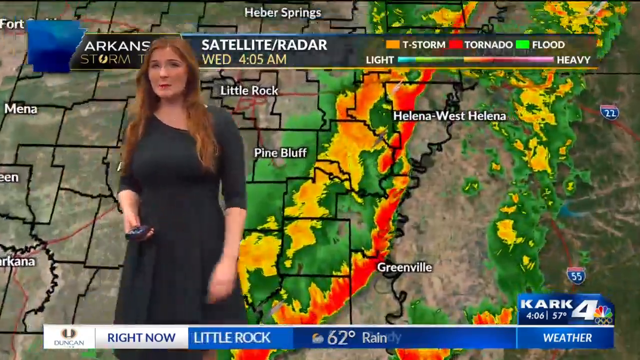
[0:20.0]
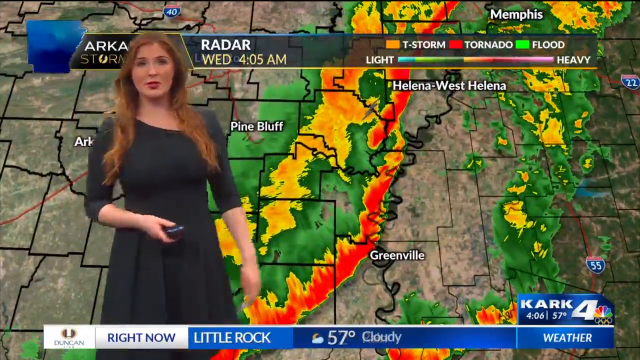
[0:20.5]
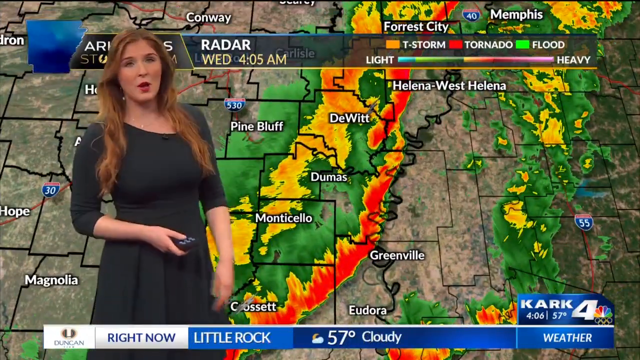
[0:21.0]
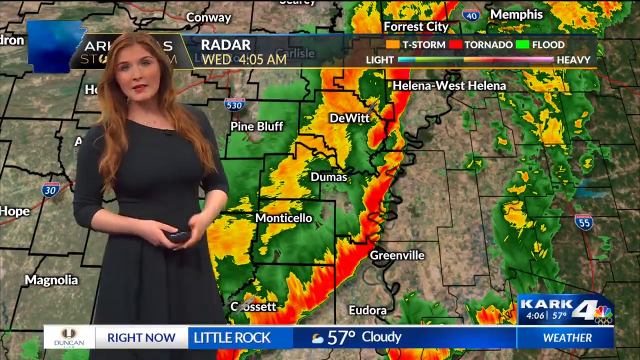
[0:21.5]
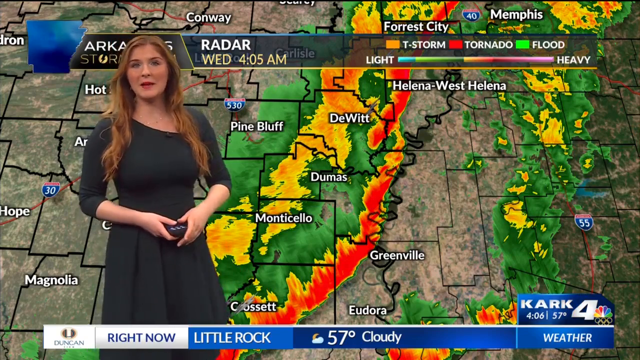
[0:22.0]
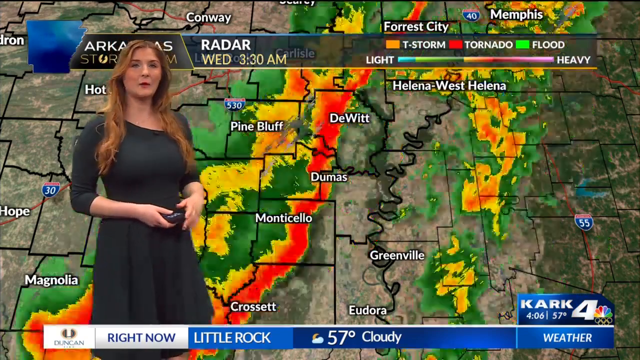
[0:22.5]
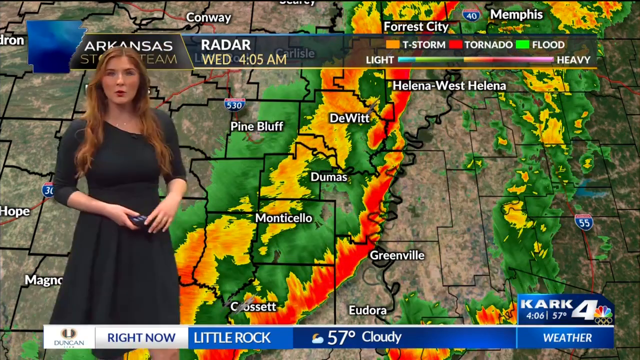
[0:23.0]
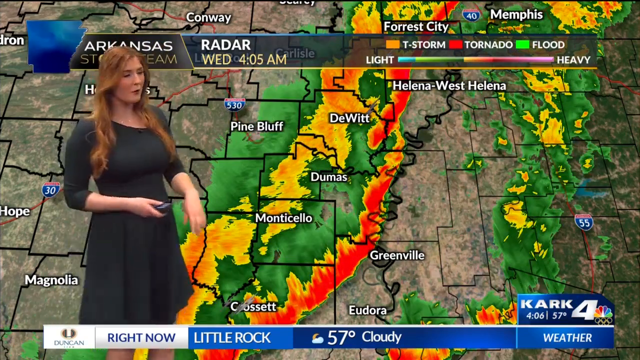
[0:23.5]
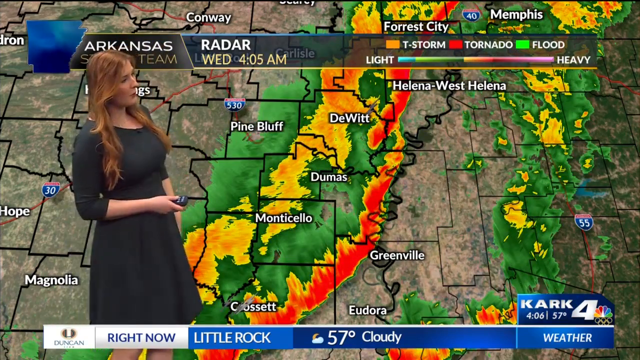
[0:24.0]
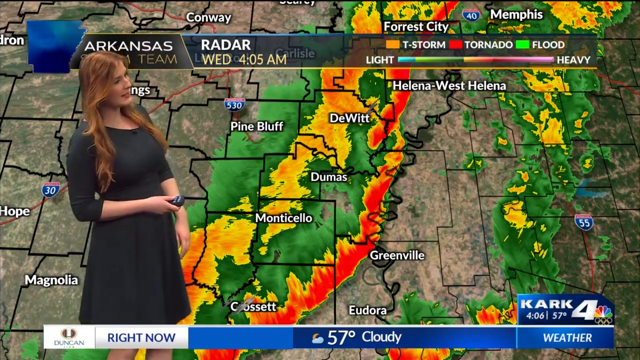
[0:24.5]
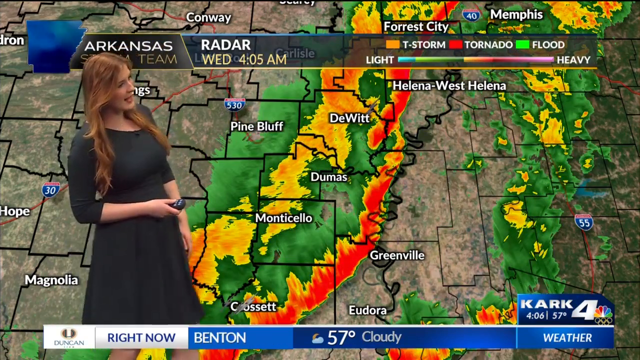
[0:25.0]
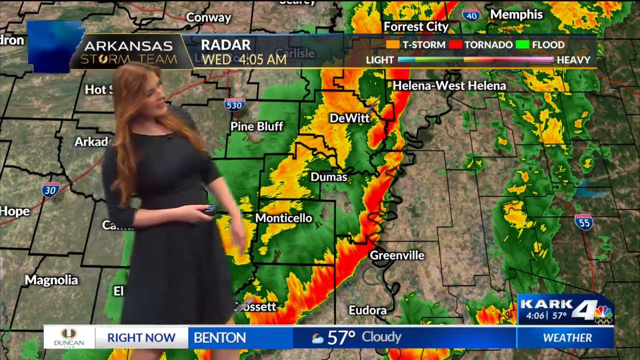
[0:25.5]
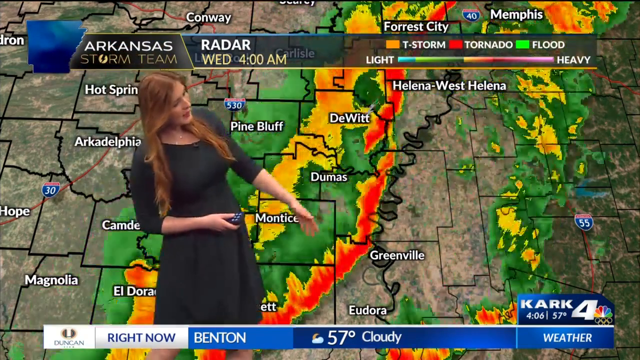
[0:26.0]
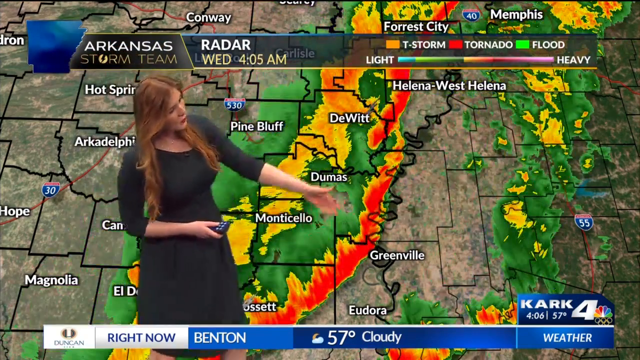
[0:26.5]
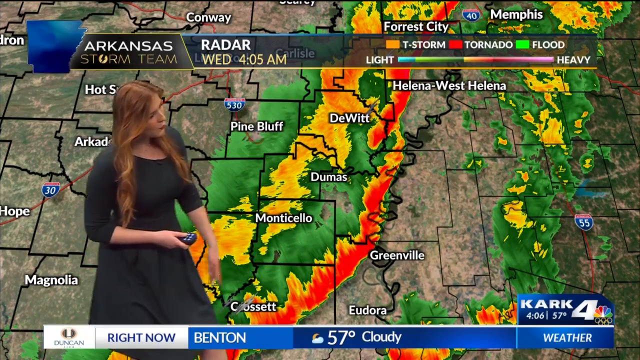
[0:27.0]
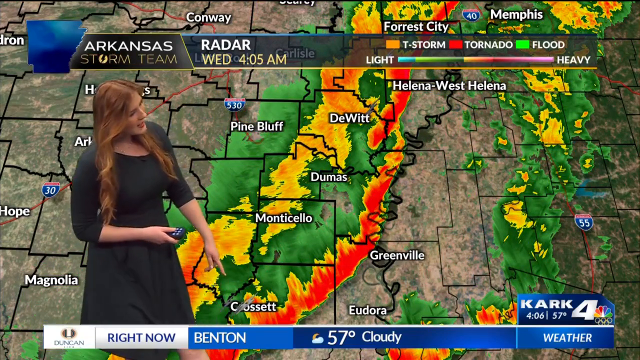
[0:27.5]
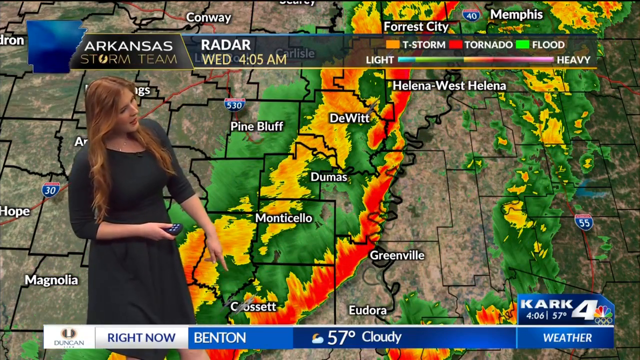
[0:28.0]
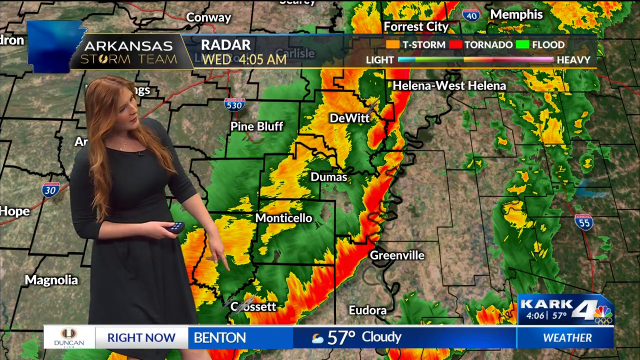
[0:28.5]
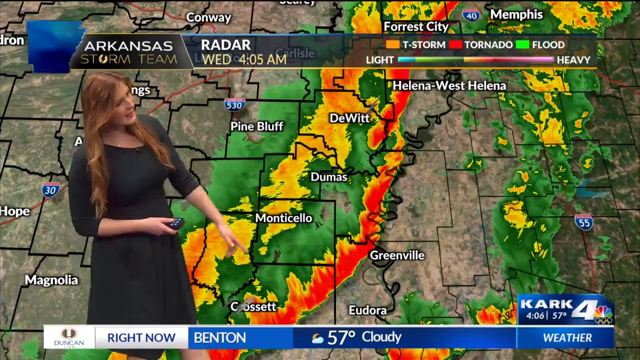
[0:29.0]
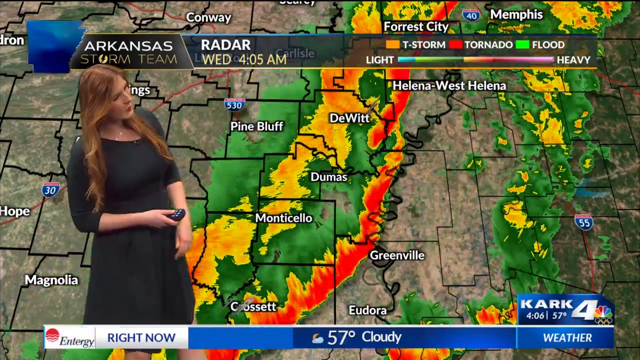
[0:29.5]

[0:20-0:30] The weather report is on "Cork 4", with "Cork" written in white on a blue background, and the heading reads "right now Little Rock". The map in the background shows Eodora, Greenville, Helena West, Helena, David, Dumas, Monticello, Cosette and Pine Bluff, and behind the reporter is Magnolia, among many more places. The map changes colours, with green, fiery red and orange colours appearing behind the reporter. The reporter holds a remote and clicks it as she speaks to the audience. The map is a radar for Wednesday 4.05 a.m., with a legend indicating that orange is for sea storms, red is for tornado and green is for floods.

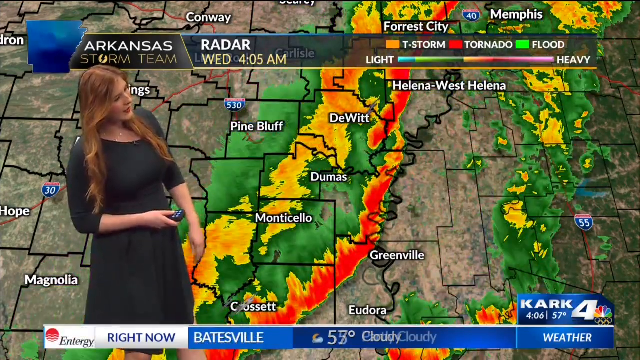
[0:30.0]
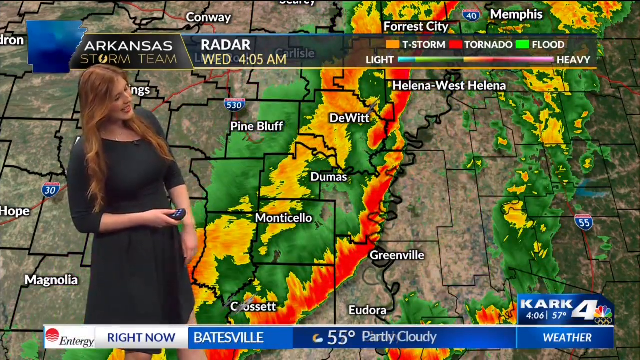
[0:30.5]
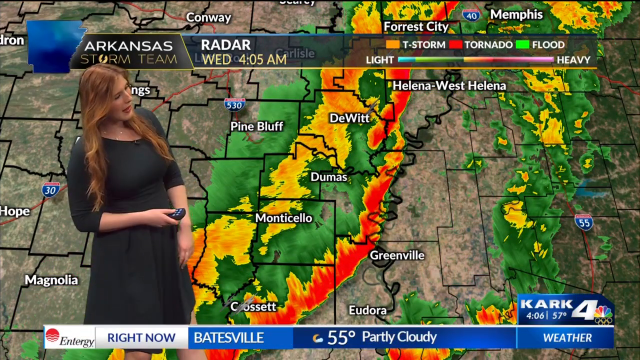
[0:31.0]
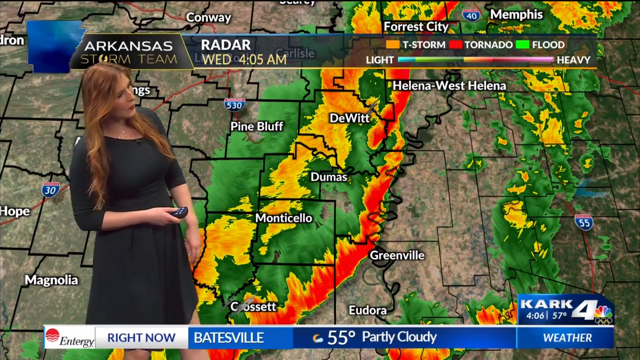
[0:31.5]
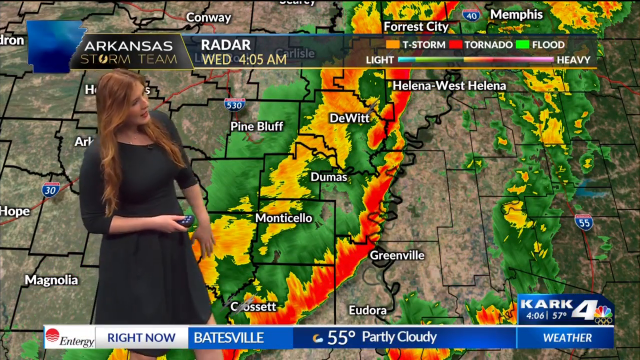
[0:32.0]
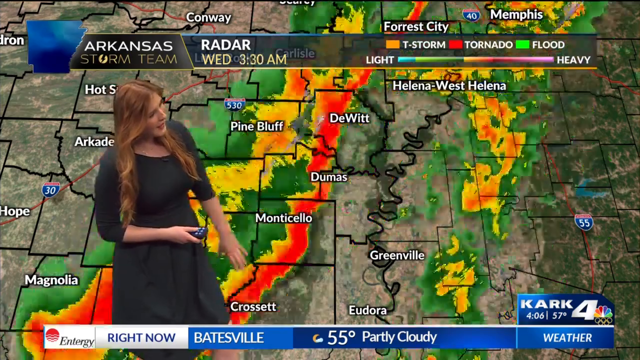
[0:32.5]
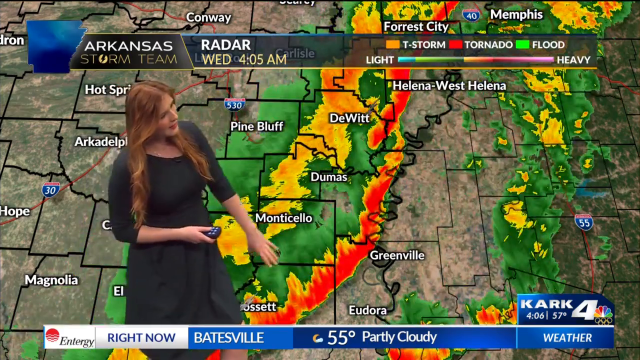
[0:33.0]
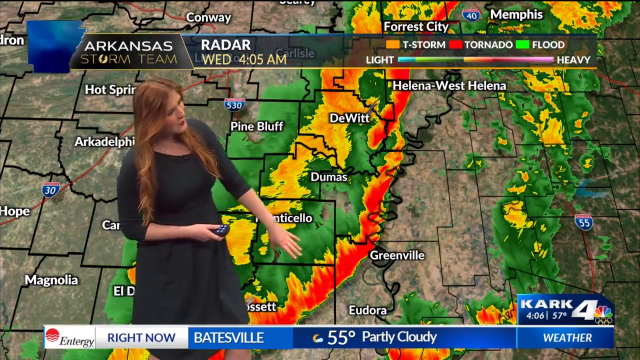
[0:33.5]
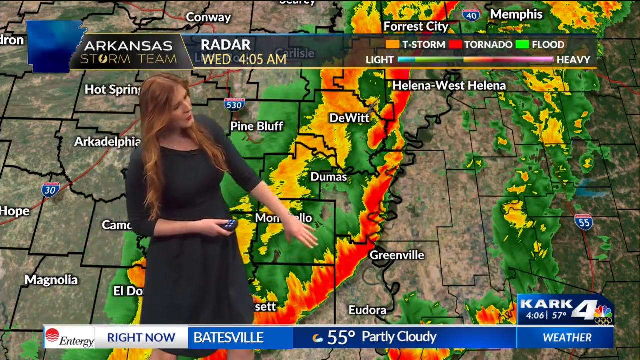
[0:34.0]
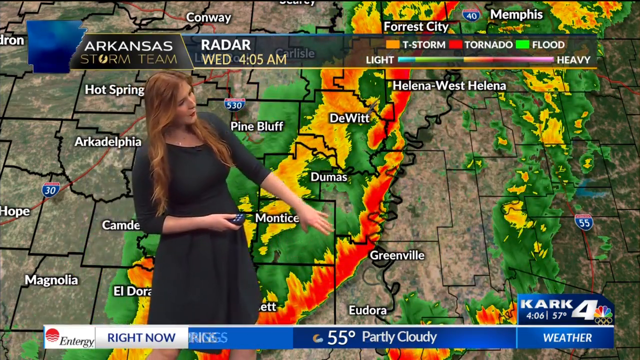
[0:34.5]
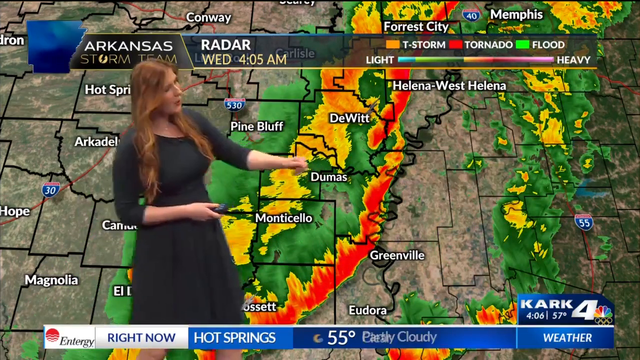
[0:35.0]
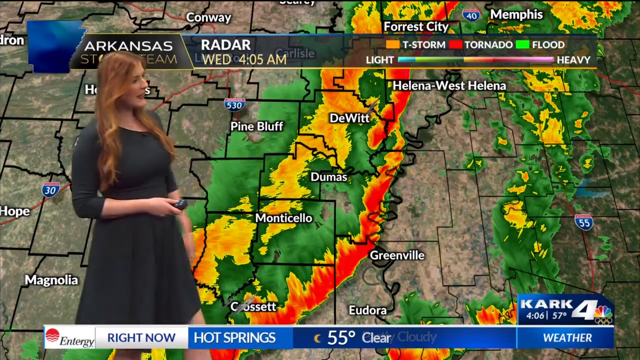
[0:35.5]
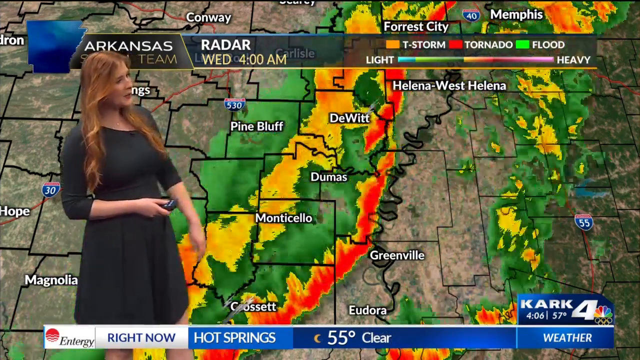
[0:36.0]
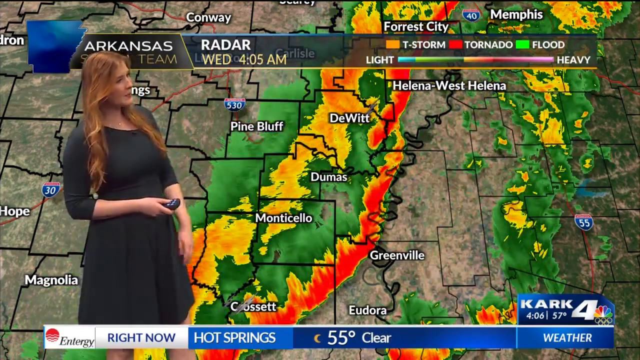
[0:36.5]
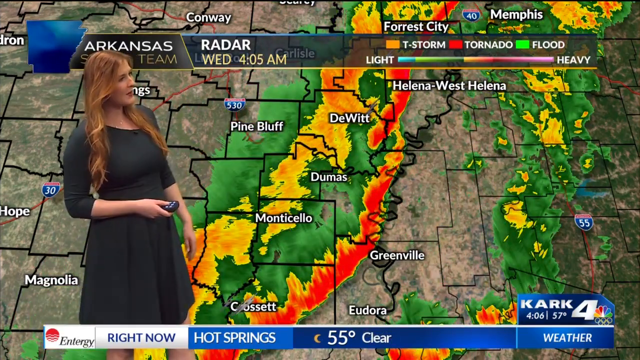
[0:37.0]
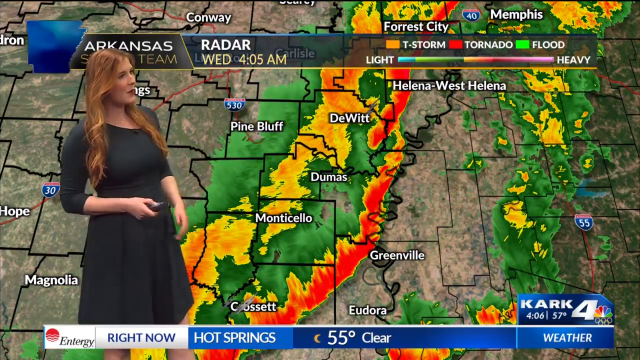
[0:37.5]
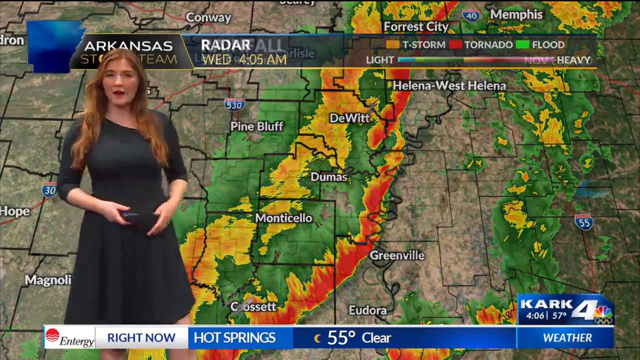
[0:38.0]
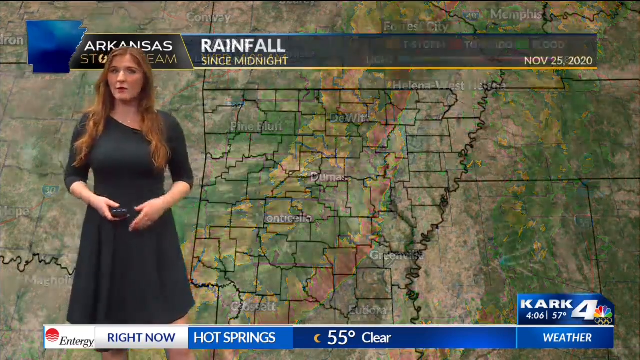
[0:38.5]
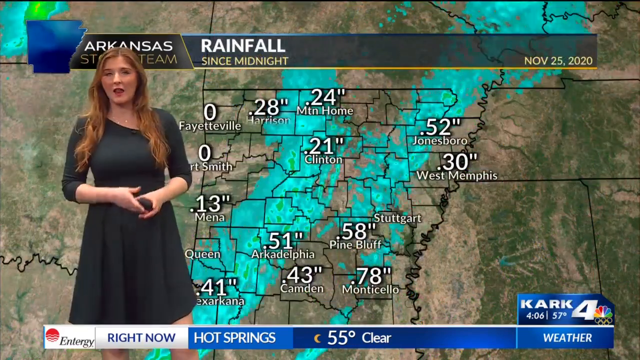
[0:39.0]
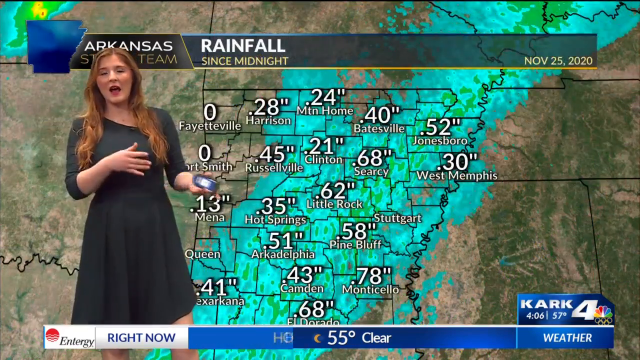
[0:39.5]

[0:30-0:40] The weather reporter has orange hair that goes down to her belly. She wears a black dress, red lipstick and a necklace. She holds a remote in her right hand and clicks it while showing the weather reports behind her. The map is a radar for Wednesday at 4 or 5 a.m., with a legend showing that orange represents sea storm, red represents tornado and green represents flood, with the colours going from light to heavy.